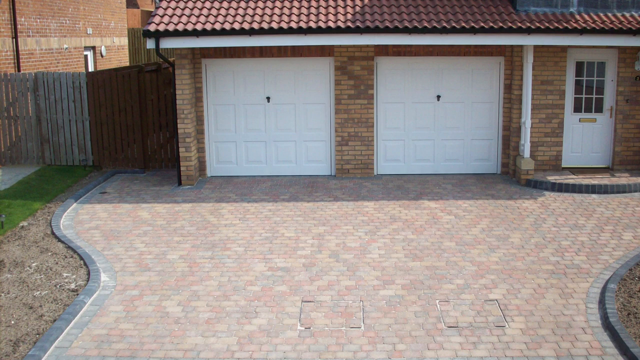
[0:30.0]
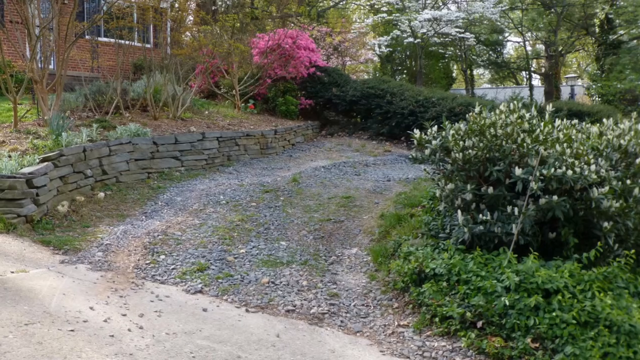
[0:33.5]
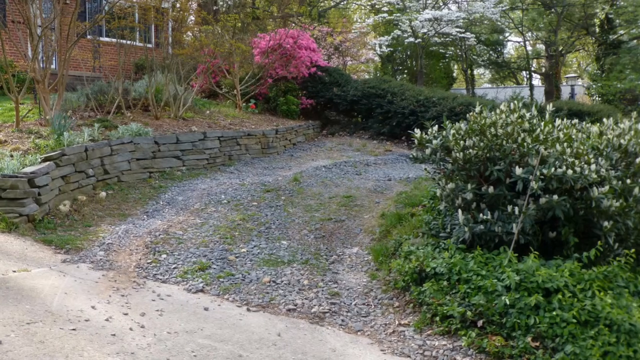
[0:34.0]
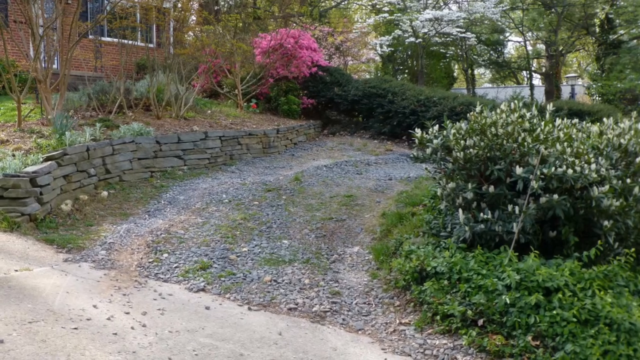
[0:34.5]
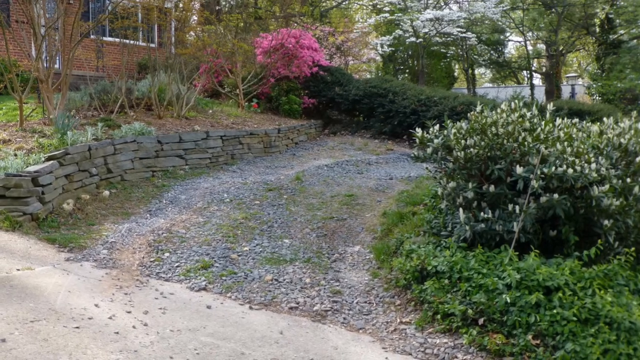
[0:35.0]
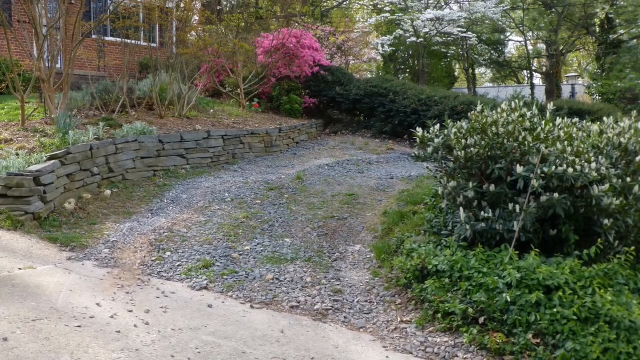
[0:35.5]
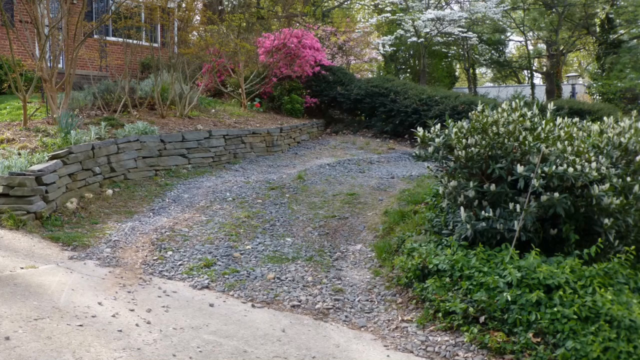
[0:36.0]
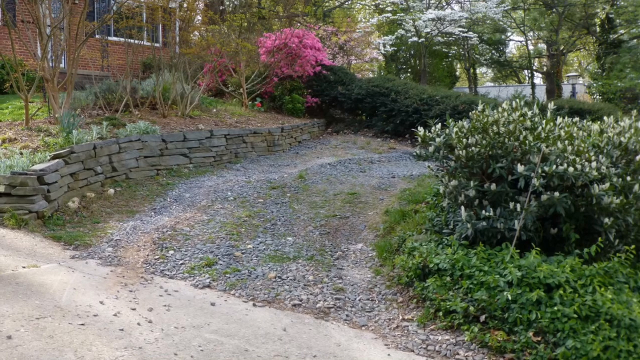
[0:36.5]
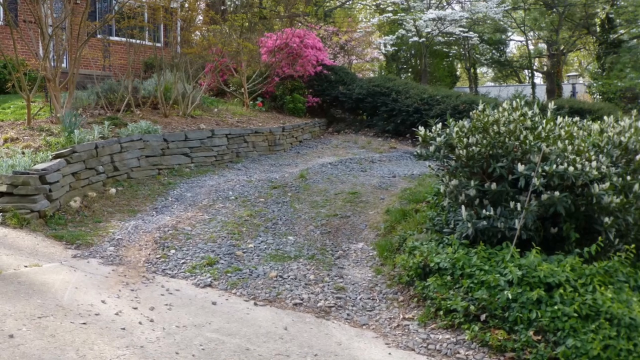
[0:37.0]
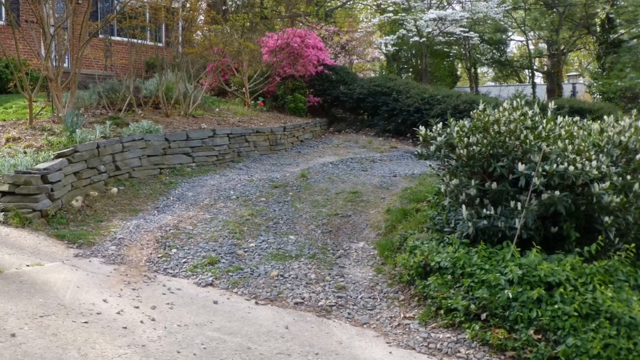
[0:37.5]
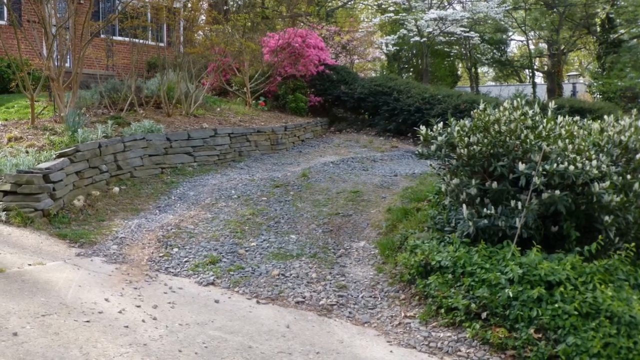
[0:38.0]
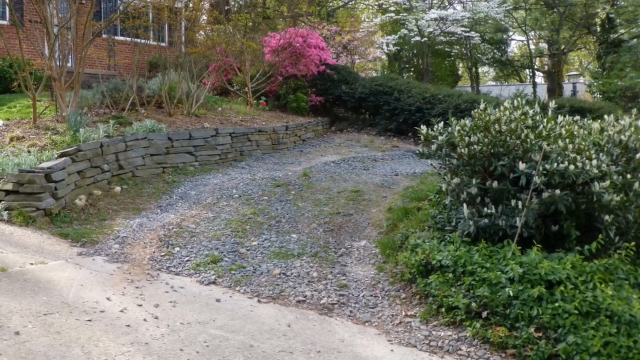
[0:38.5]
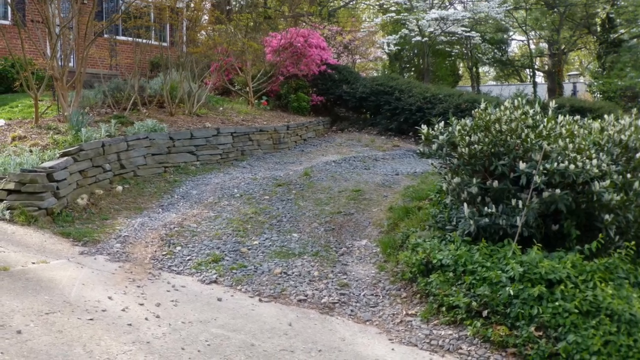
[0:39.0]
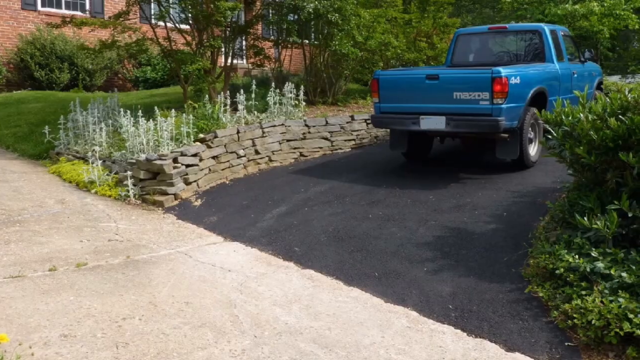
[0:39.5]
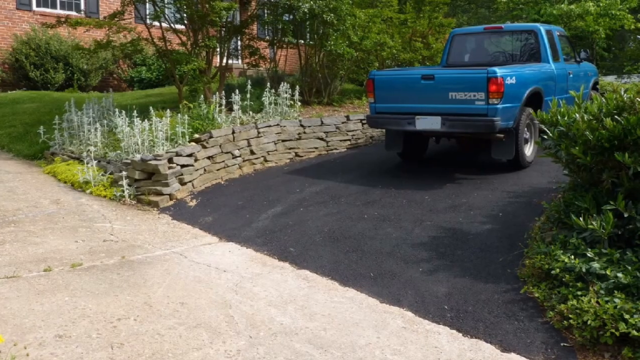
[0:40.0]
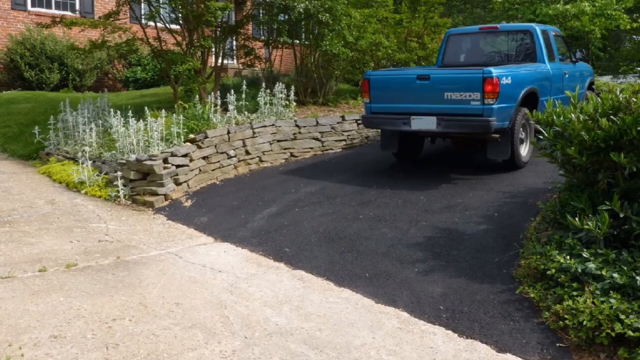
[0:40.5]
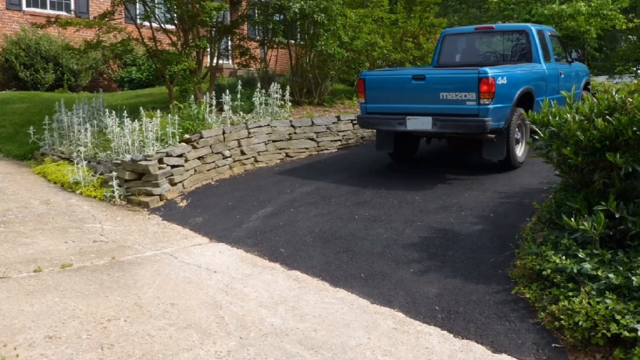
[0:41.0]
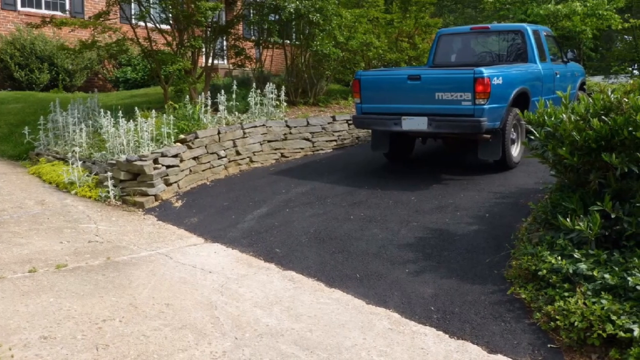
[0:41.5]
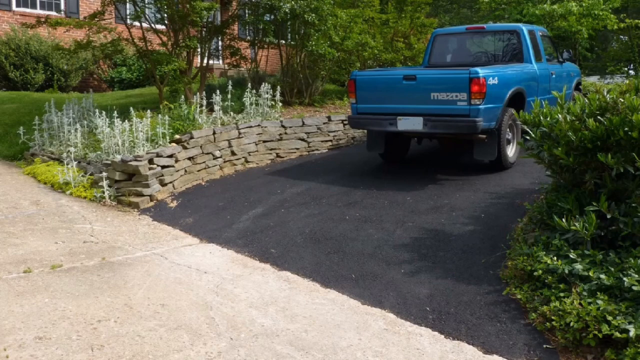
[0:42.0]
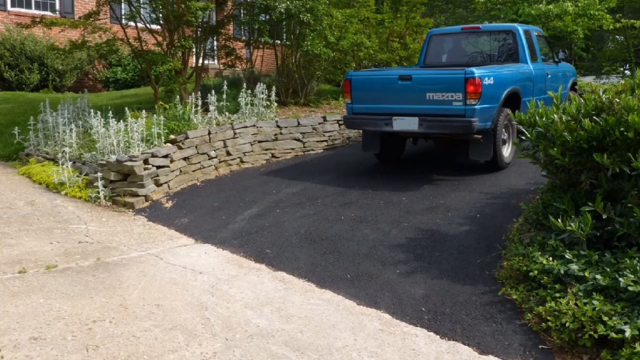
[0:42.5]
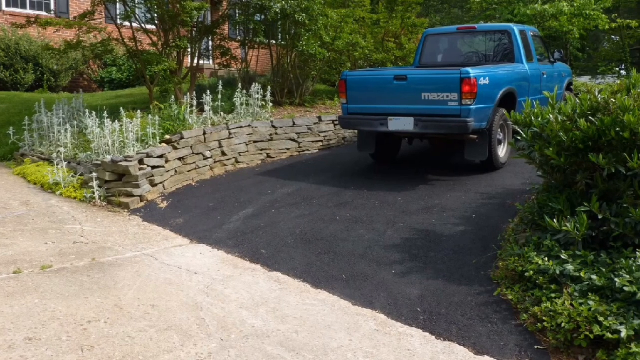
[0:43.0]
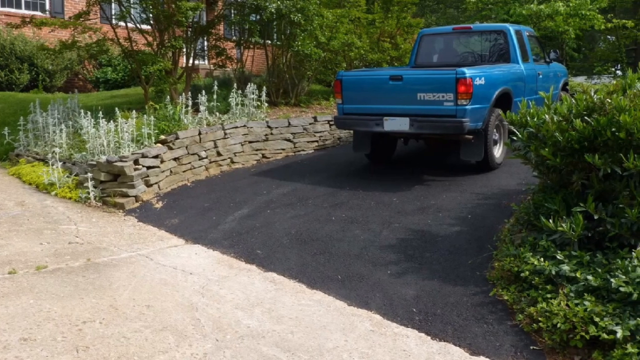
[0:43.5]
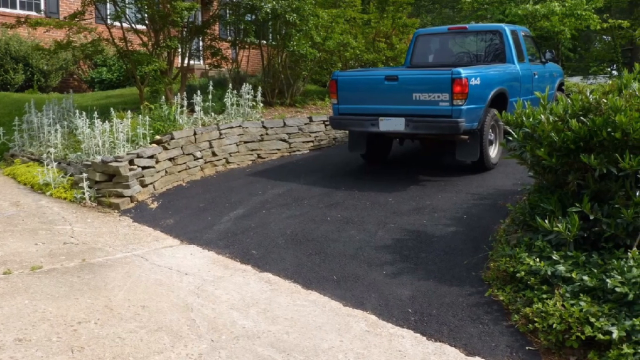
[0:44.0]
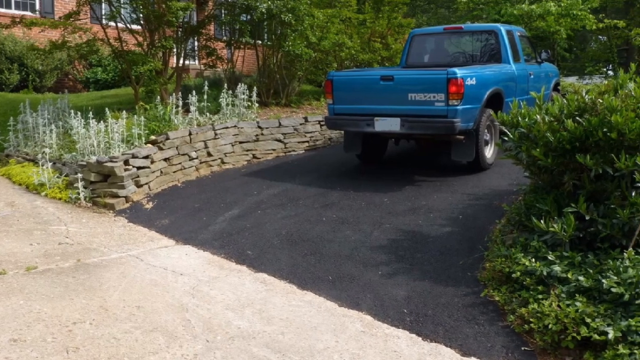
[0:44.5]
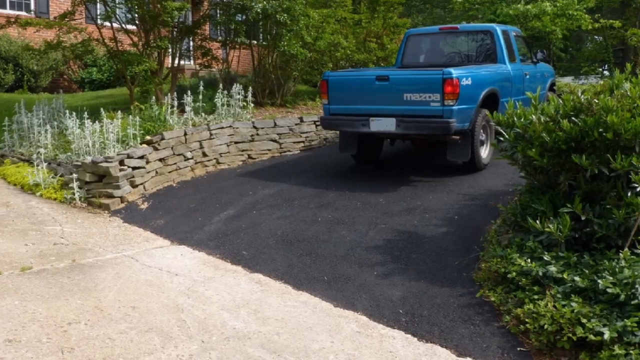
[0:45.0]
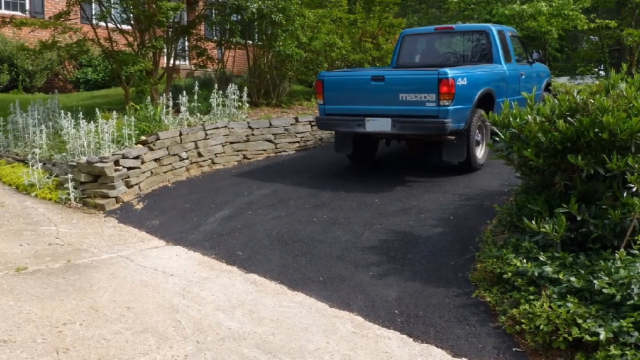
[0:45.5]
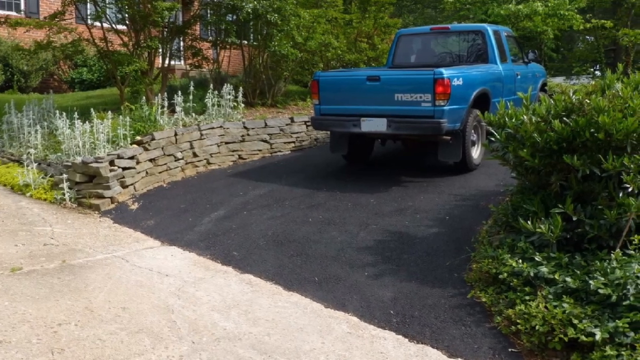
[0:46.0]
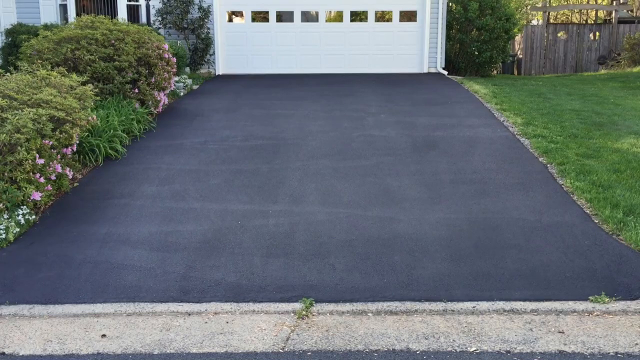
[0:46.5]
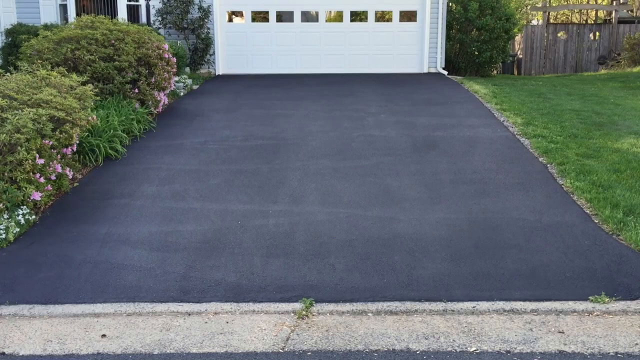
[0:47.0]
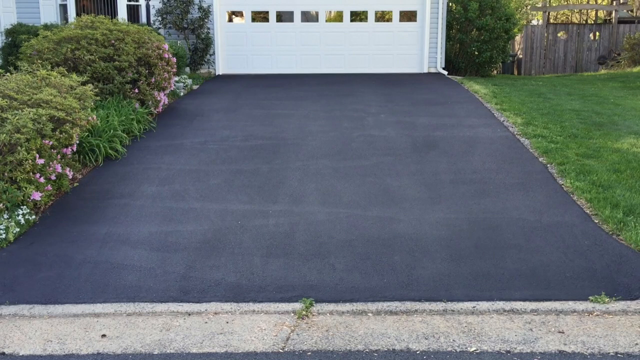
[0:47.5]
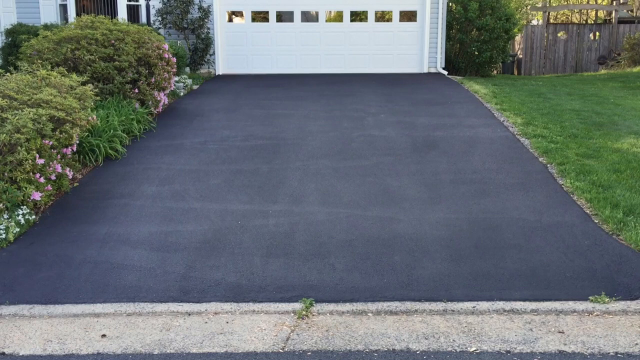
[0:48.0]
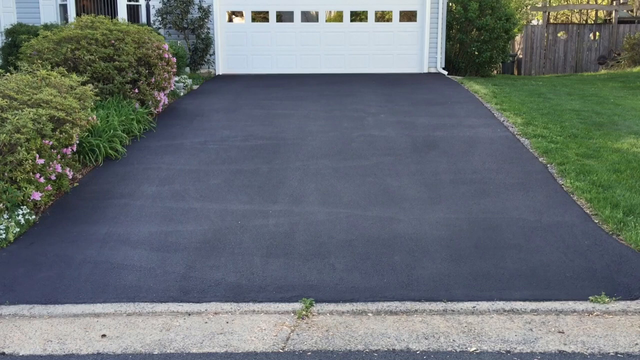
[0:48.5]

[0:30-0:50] A blue car is at the house on the hill. The tarred road is now fixed. The double-storey house on the hill has a red tiled roof, and there are pink flowers in a garden in the compound. There are bricks and a black tarred surface that was being fixed. Two garages are shown, including a white garage with glass. One side of the yard has a slab and the other side has a green lawn. No animals appear, only the car, the house, trees and the road. There are also poles.